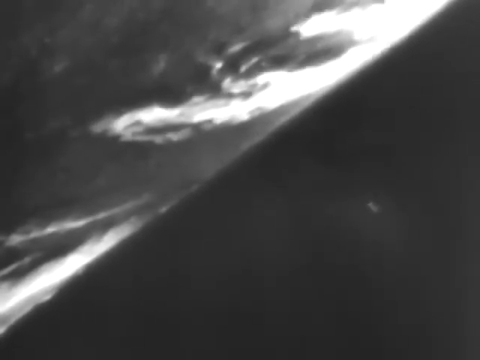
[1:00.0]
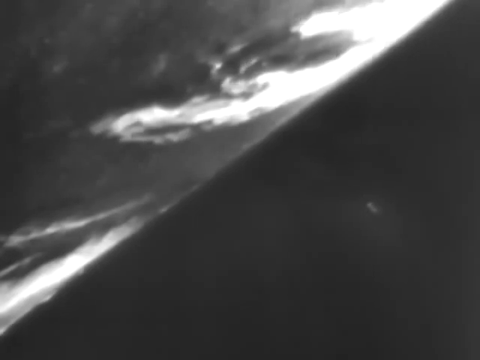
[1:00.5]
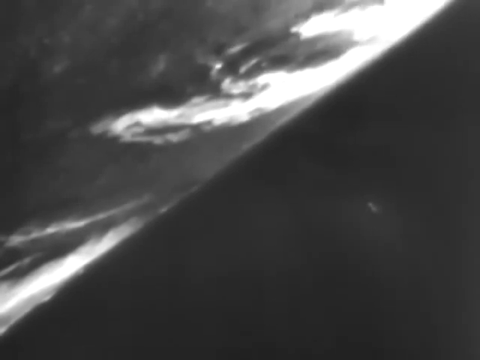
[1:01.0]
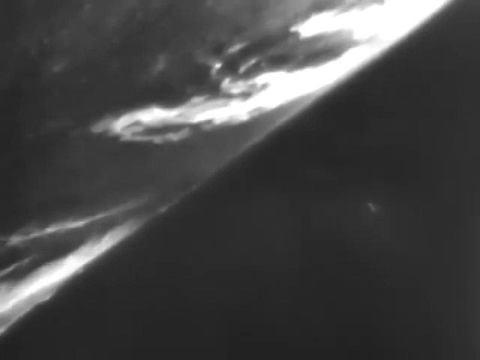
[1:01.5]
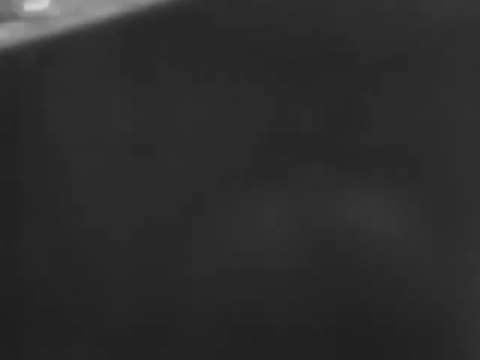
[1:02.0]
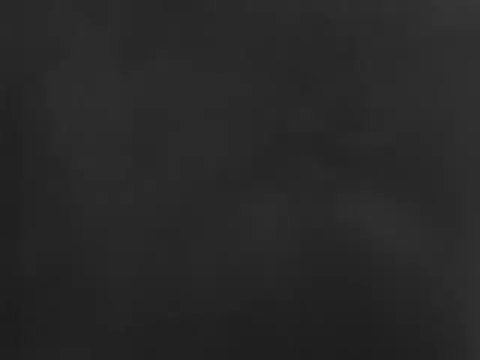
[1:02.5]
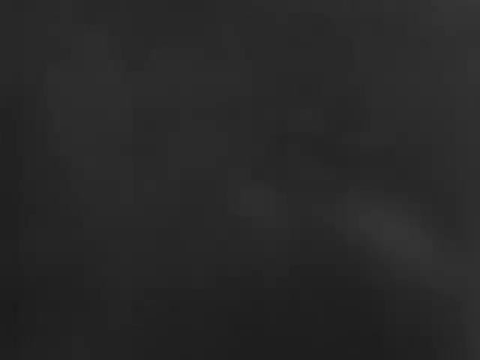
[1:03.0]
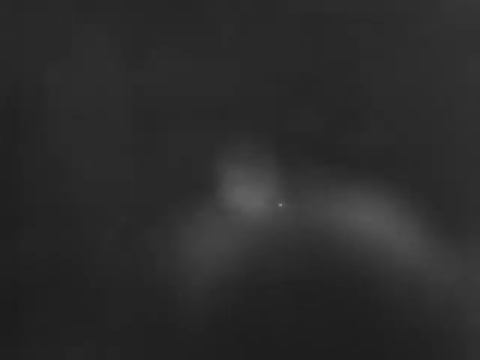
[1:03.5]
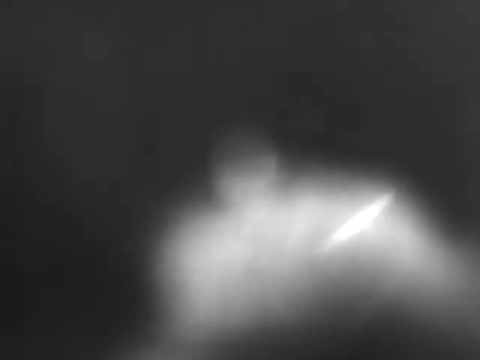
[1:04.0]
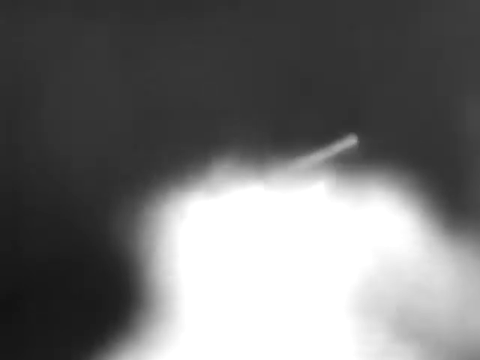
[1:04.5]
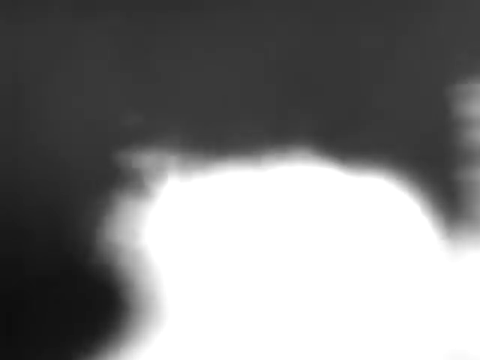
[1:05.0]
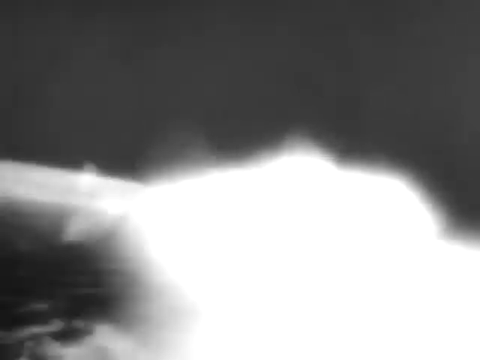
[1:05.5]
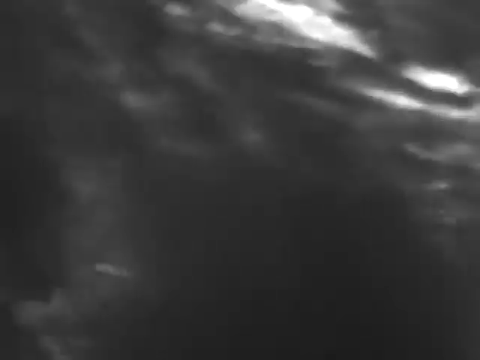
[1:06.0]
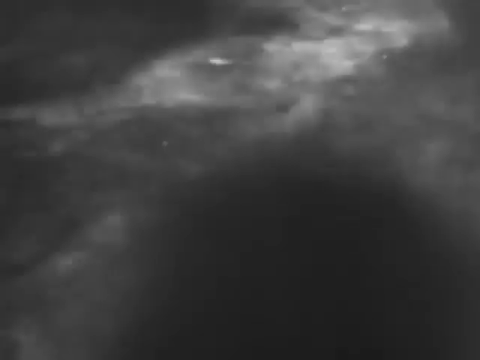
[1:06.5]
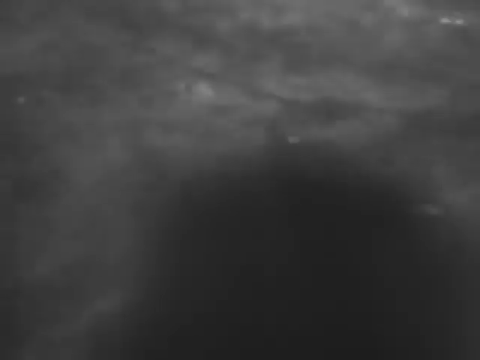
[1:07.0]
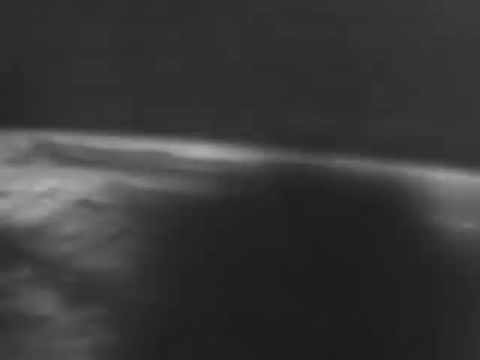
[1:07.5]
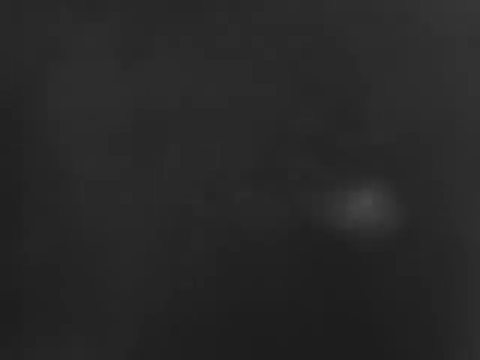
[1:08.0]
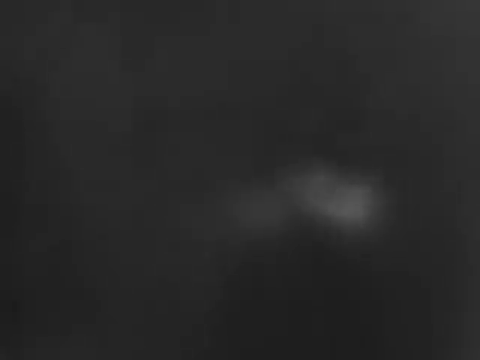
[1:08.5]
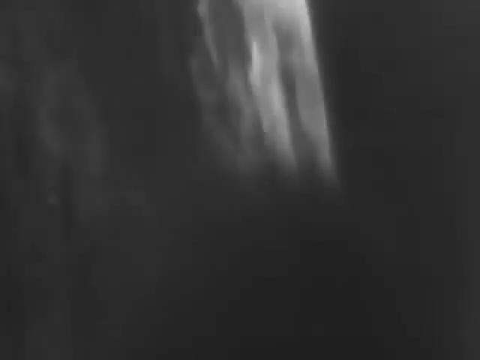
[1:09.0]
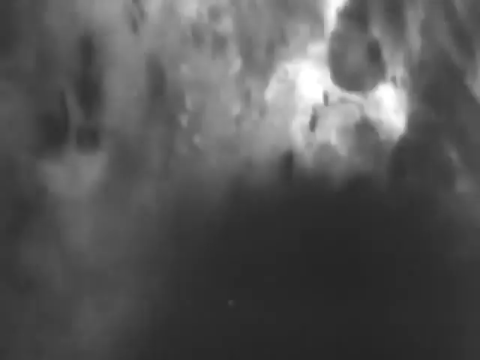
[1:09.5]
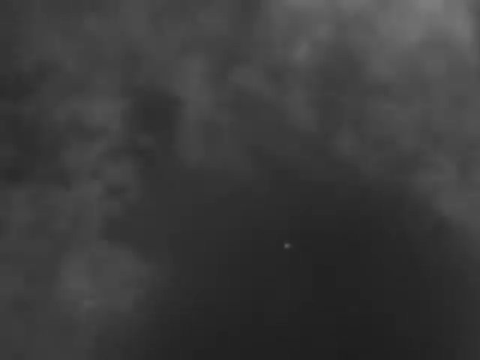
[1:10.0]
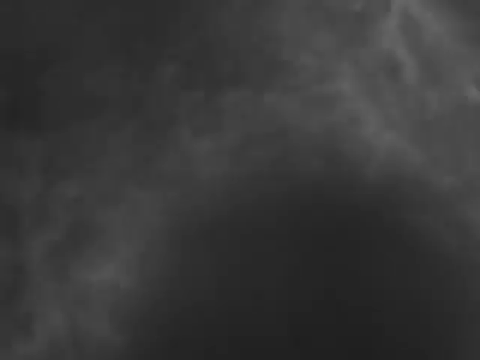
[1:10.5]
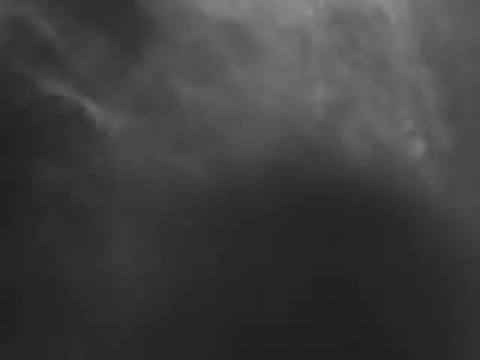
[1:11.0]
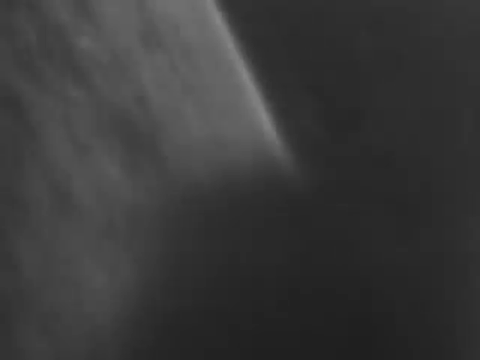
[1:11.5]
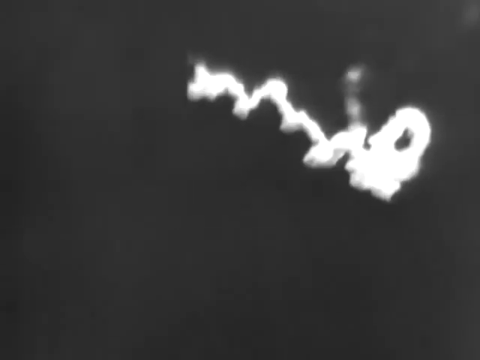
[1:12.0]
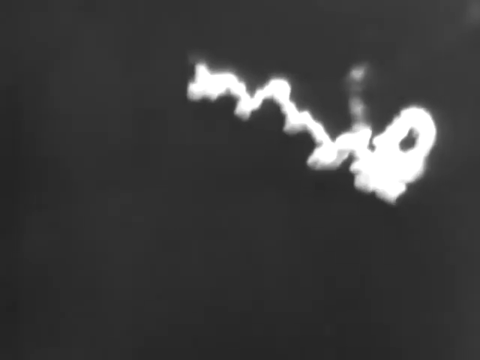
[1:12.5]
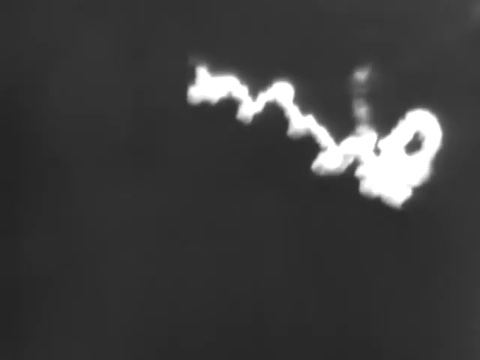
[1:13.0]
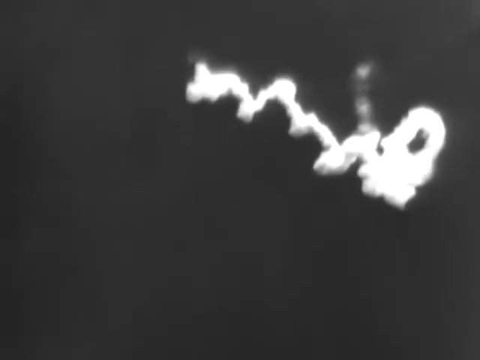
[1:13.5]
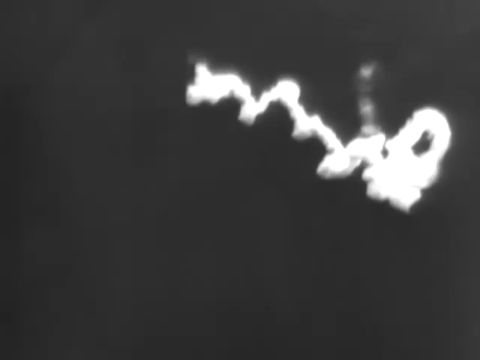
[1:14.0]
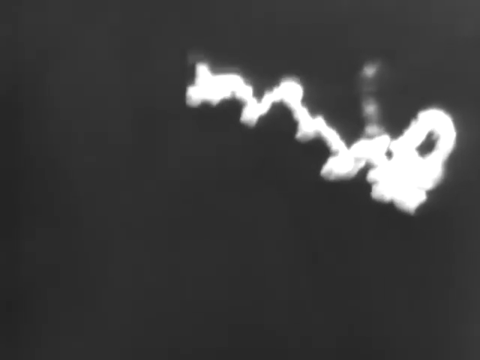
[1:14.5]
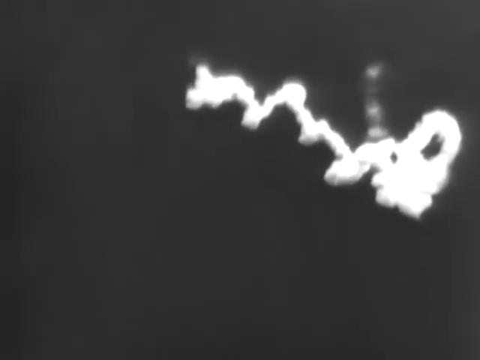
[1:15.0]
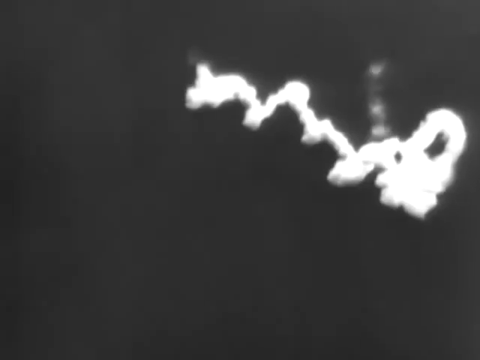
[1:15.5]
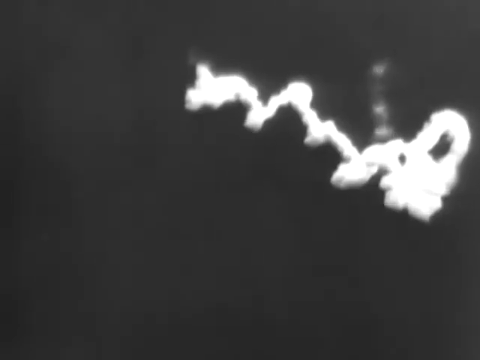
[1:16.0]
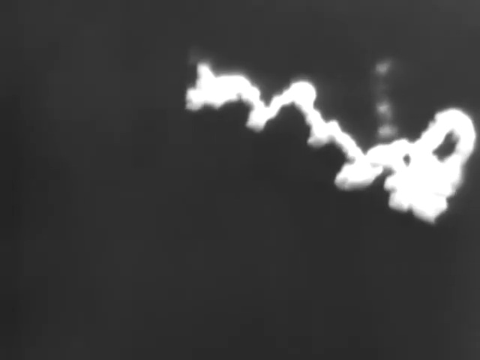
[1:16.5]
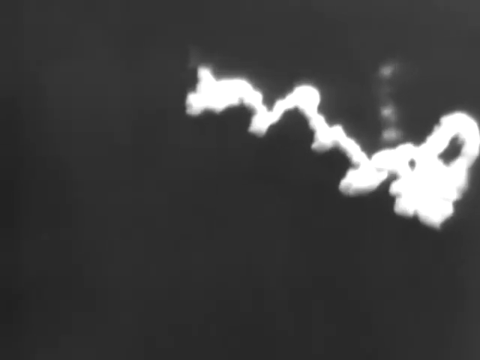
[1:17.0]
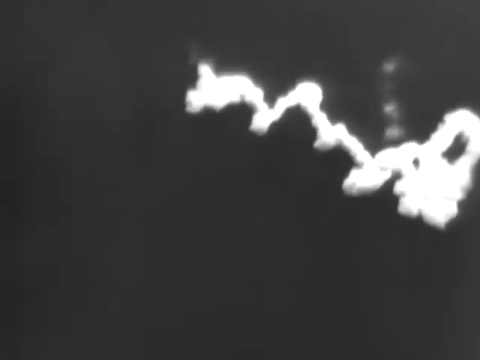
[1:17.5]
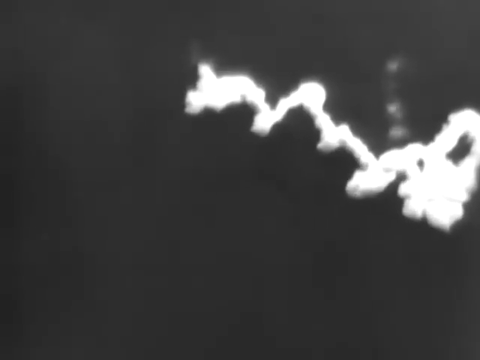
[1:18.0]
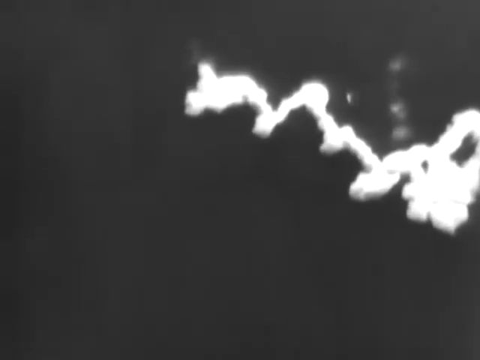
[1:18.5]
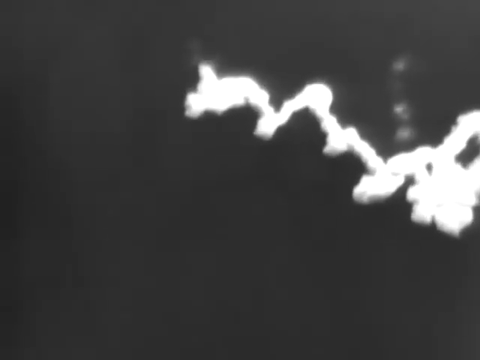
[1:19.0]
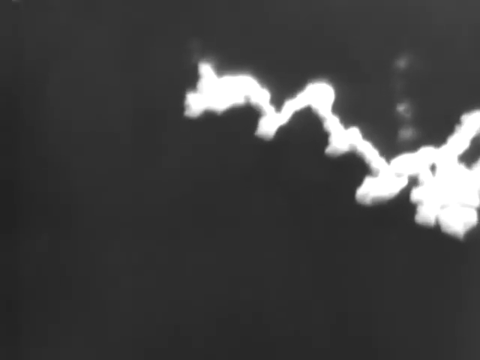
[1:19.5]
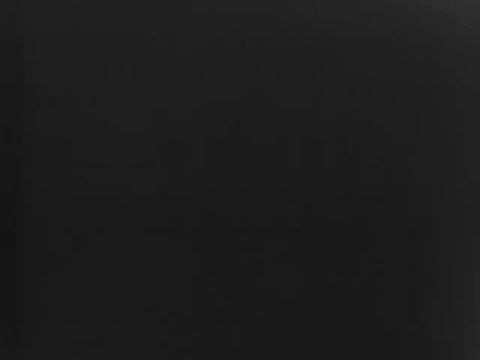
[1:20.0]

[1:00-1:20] The Earth and a tiny rocket in space are shown, the rocket looking really small on the screen. Another space view follows with some bright light, apparently a different view of the space rocket. Then there is just a lot of white smoke; it is unclear whether the rocket exploded or is heading back toward Earth.